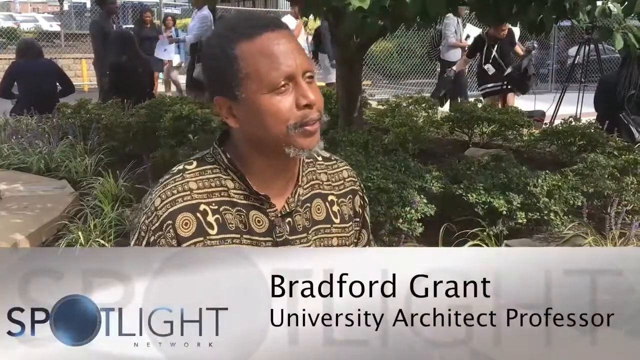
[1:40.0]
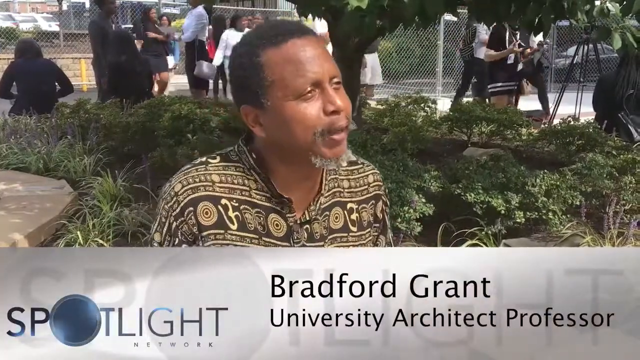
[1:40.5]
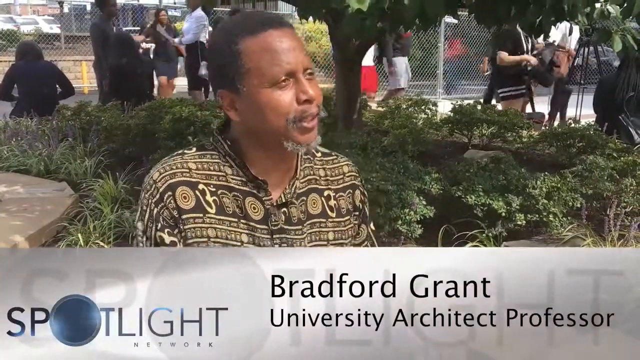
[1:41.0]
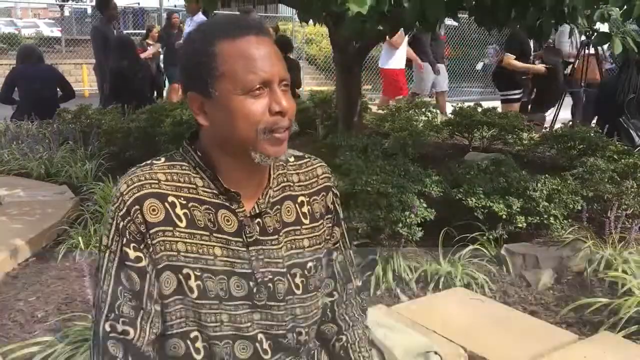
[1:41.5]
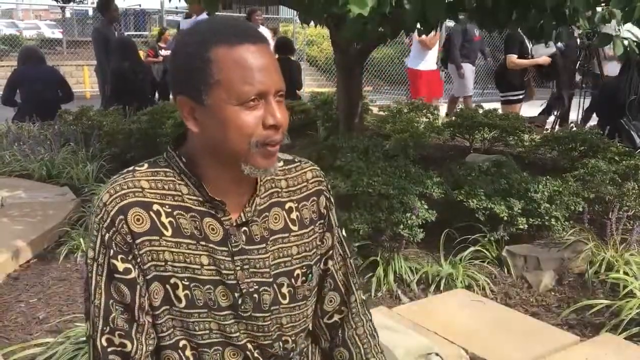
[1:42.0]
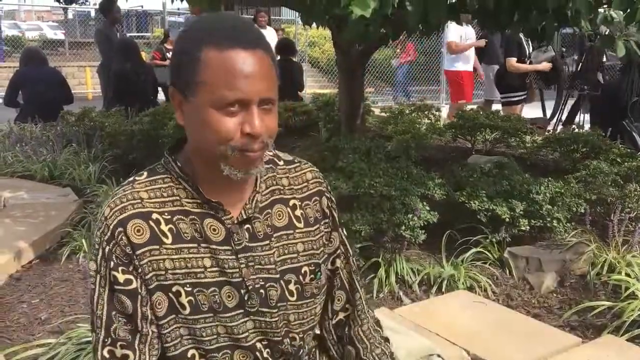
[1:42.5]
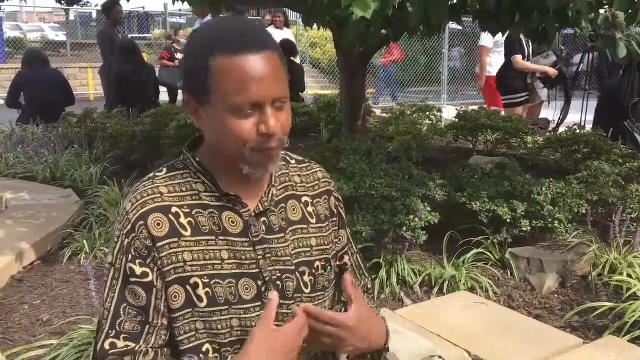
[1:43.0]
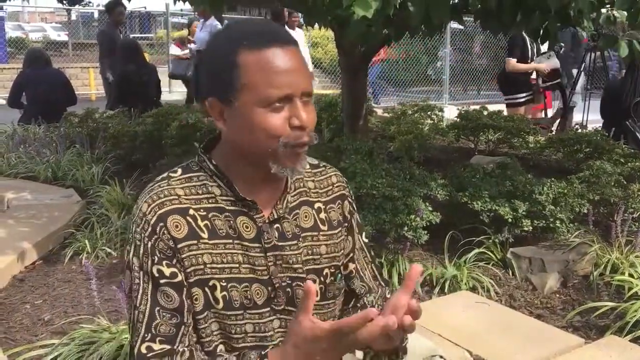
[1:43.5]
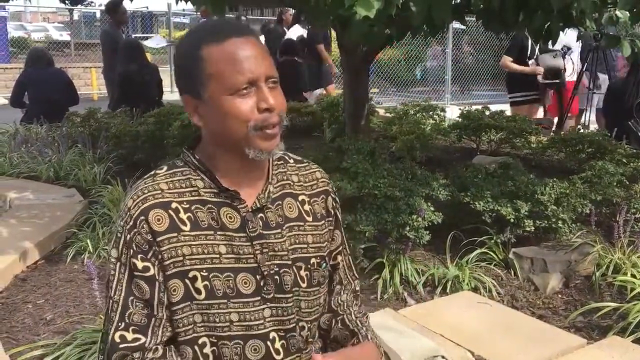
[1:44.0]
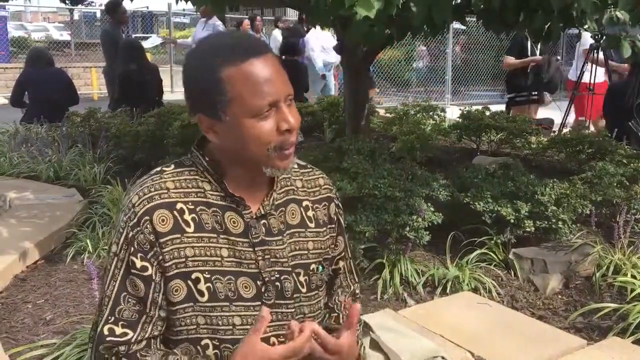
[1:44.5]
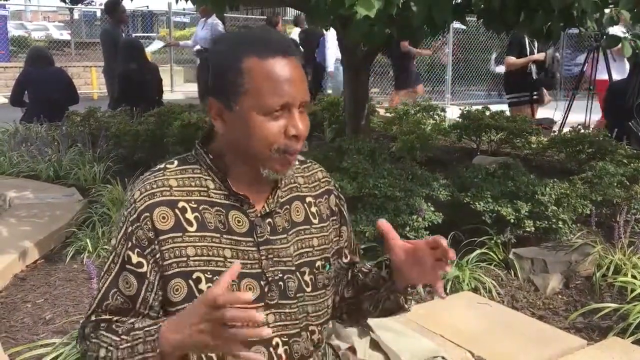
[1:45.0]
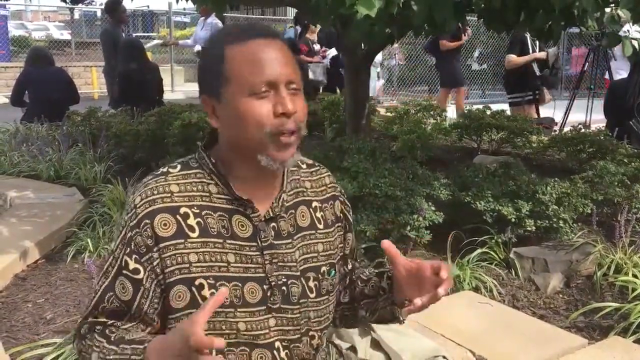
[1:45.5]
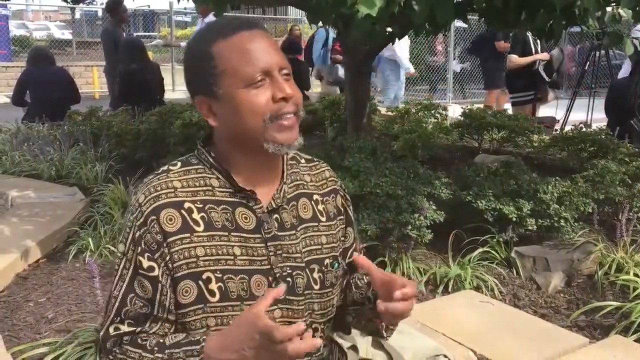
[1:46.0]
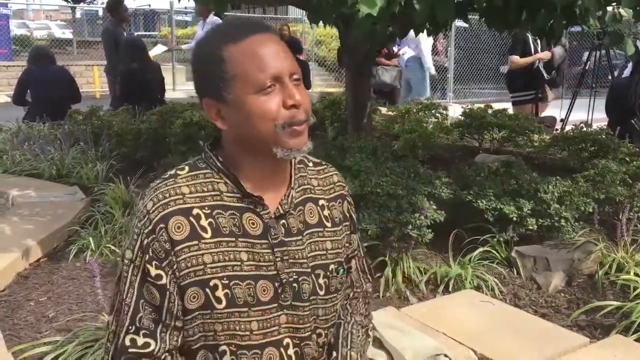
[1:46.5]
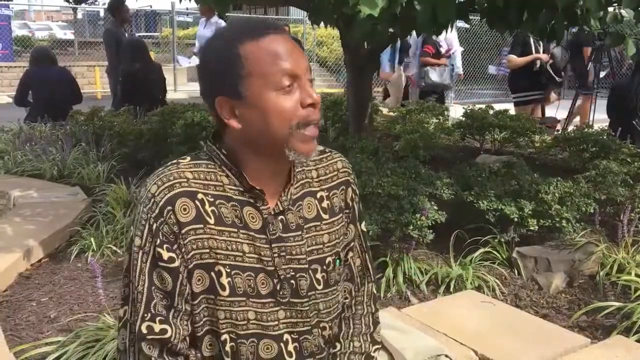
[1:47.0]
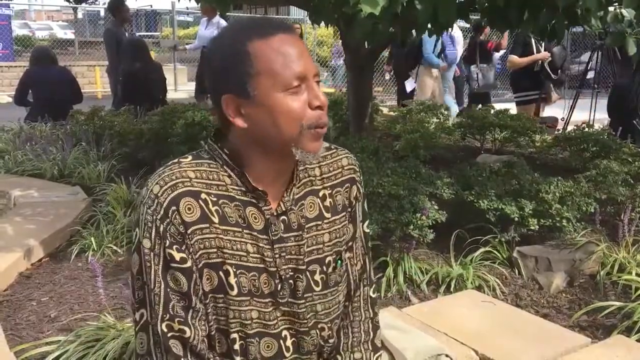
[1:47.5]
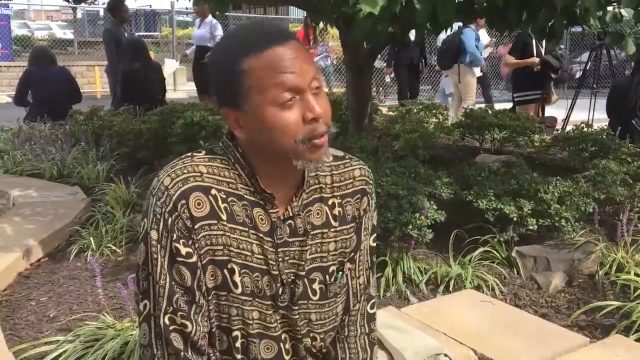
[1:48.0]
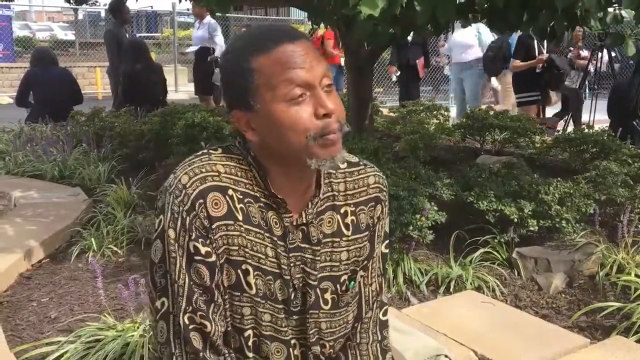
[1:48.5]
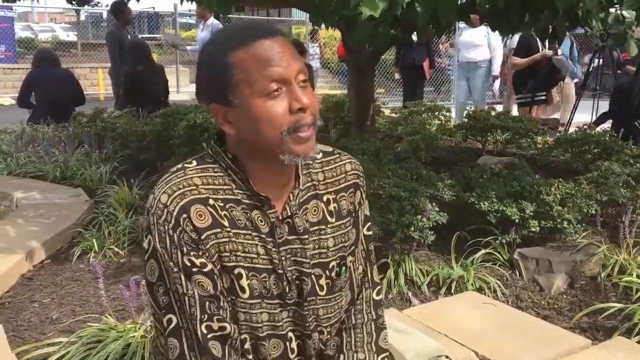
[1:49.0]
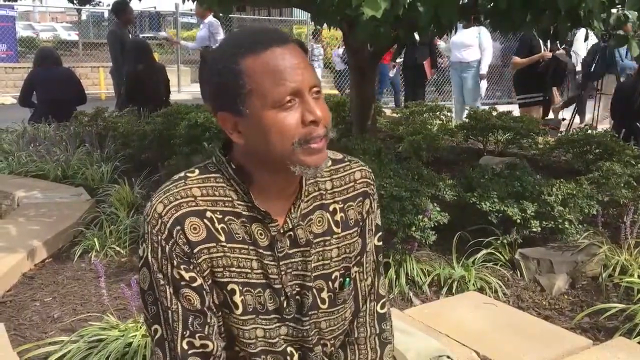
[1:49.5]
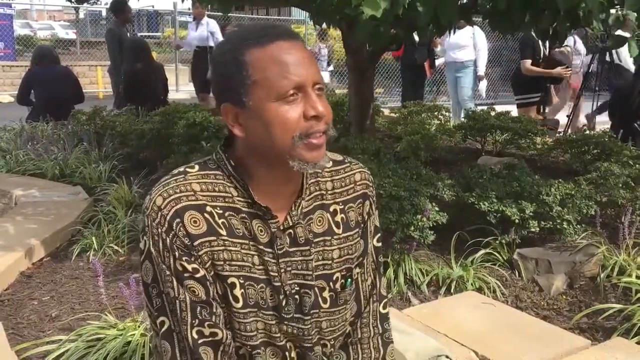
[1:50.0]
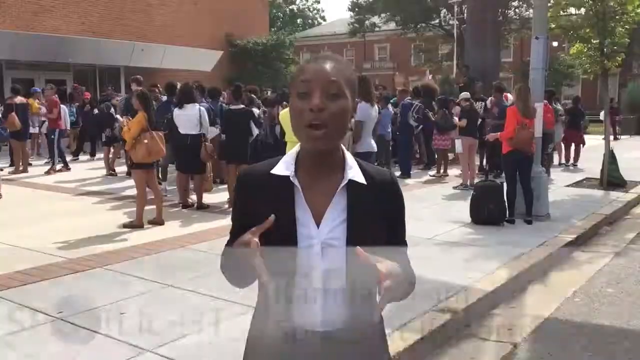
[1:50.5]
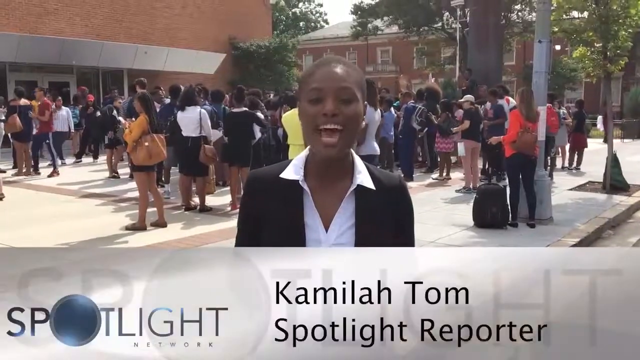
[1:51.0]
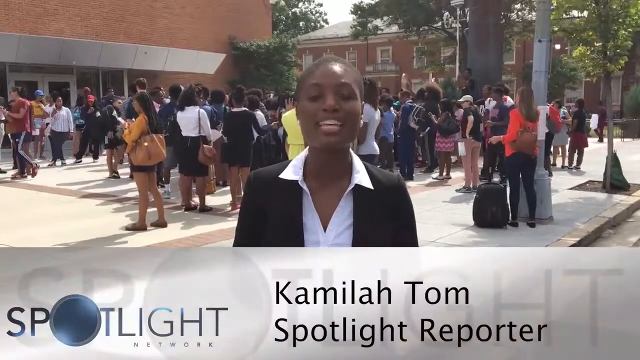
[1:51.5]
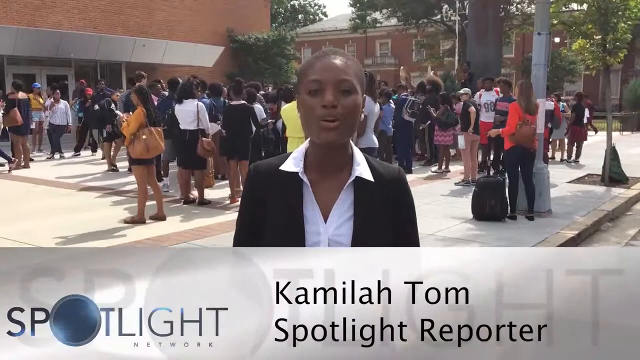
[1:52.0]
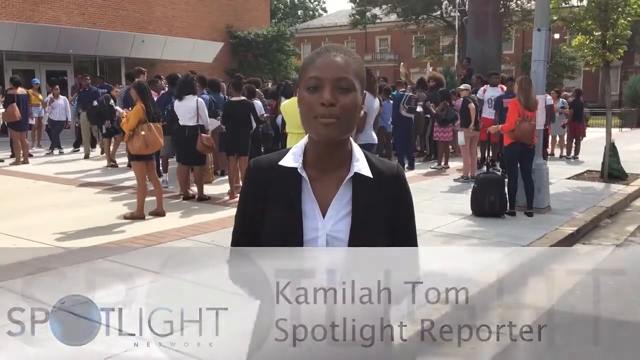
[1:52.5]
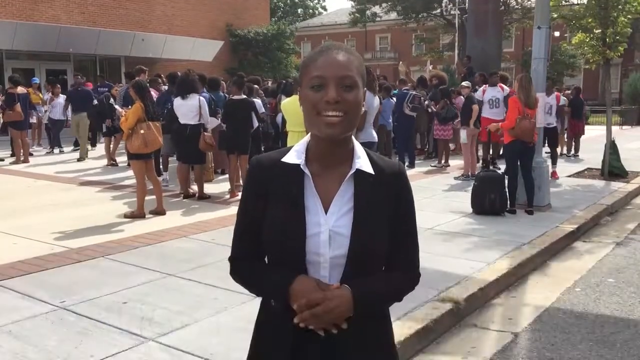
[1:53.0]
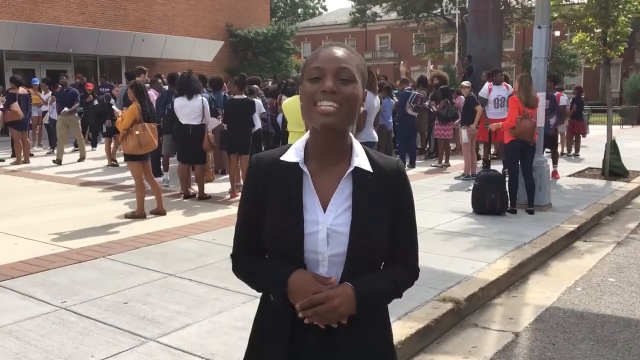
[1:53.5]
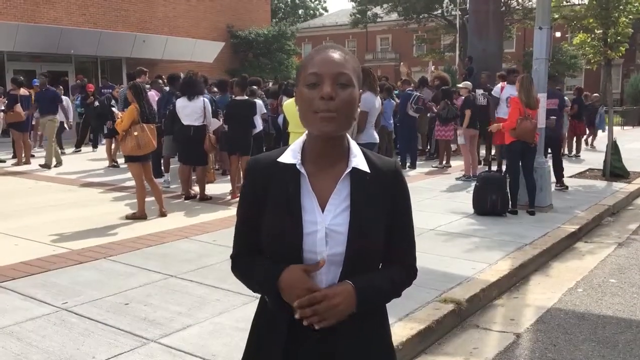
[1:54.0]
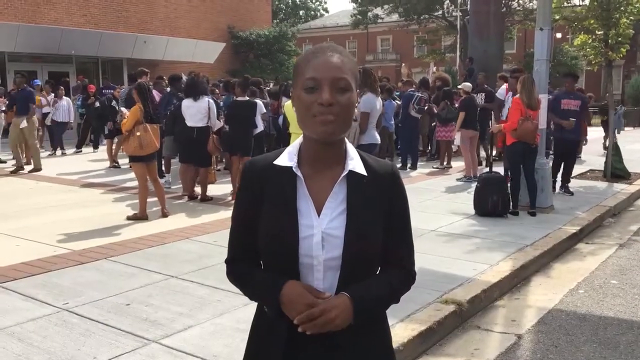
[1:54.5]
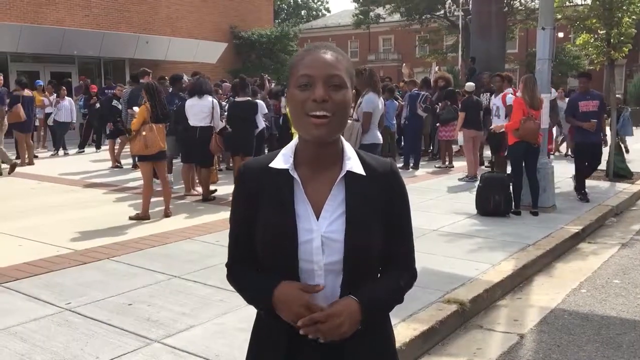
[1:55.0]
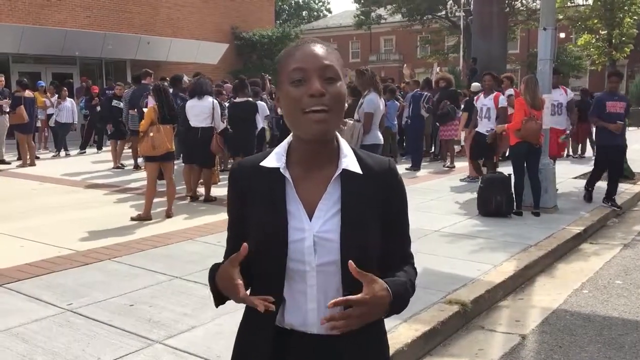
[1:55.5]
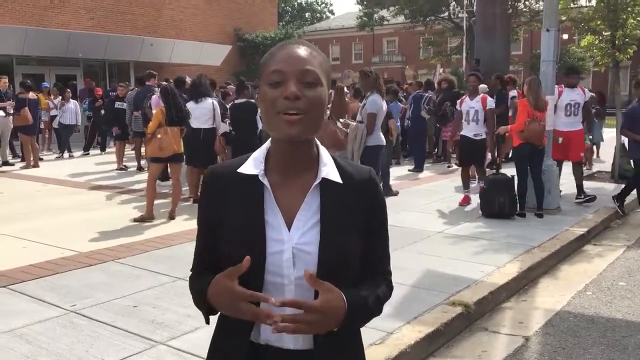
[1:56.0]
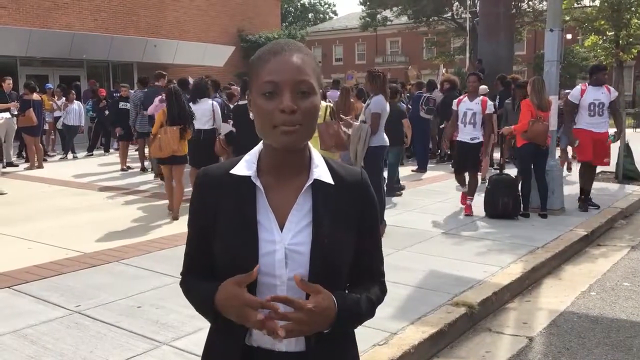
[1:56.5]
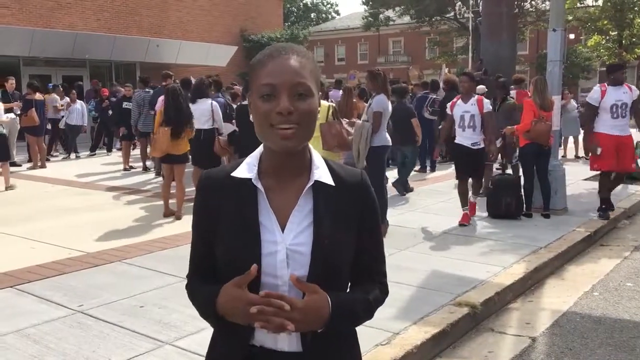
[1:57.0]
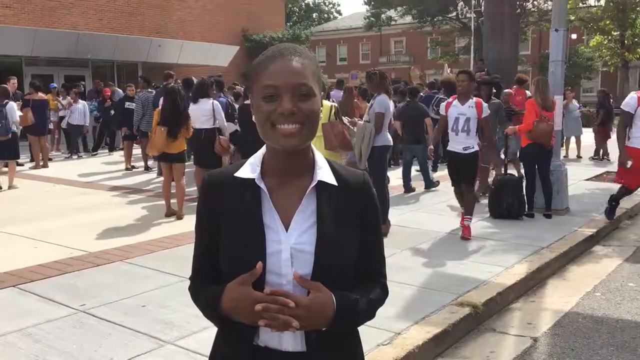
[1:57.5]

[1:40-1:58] Text underneath says he is a "university architect professor," probably meaning architecture. Next comes Camilla Tom, identified by a graphic as "spotlight reporter": an African American woman wearing a black suit jacket and white shirt, apparently the presenter of the piece, which seems to be made by the Howard University media department. The inside of what was apparently the ceremony for the Howard University sesquicentennial, 1867 to 2017, is shown in overview. Various people, mostly students and also professors, are interviewed, mostly outside the auditorium, where the protest was moved after interrupting the ceremony inside.